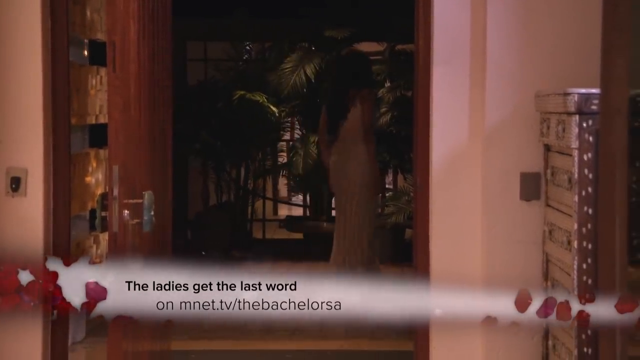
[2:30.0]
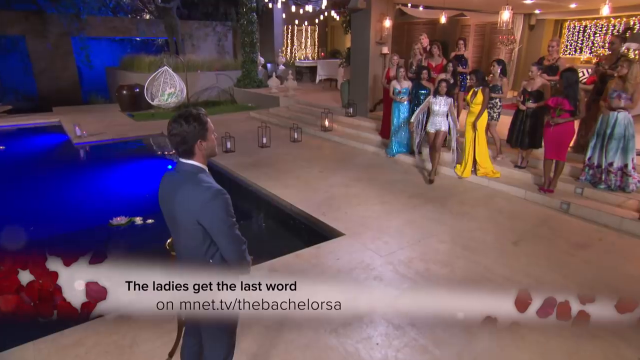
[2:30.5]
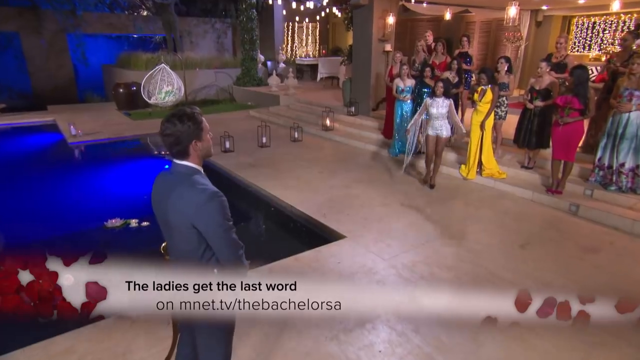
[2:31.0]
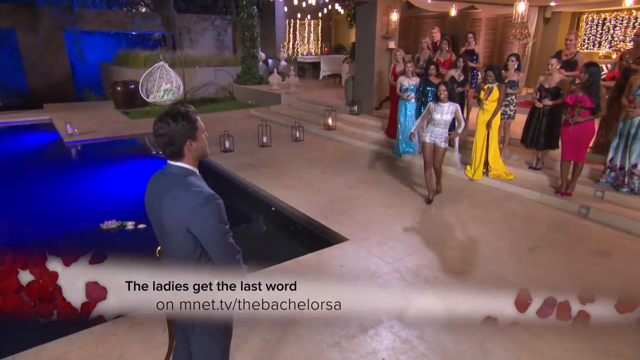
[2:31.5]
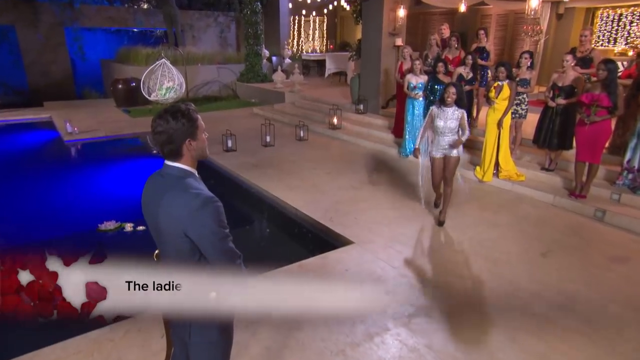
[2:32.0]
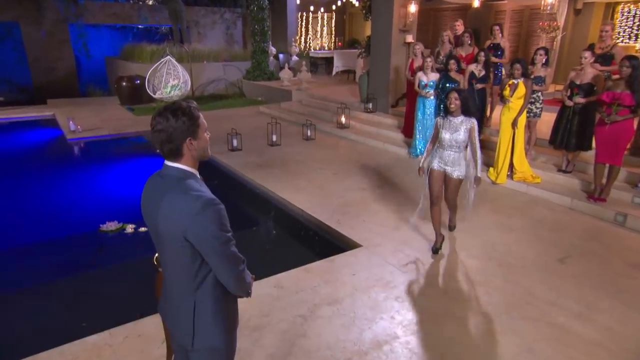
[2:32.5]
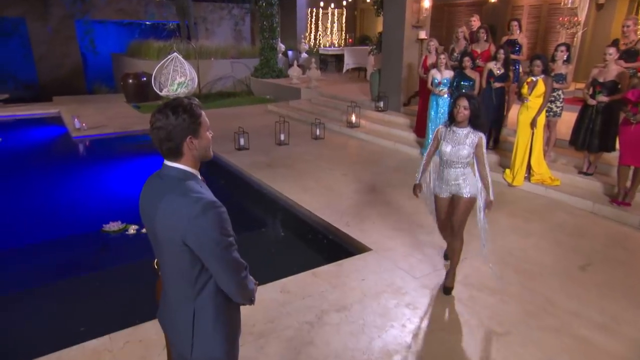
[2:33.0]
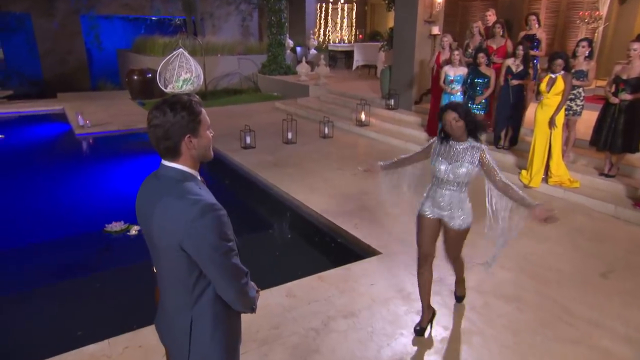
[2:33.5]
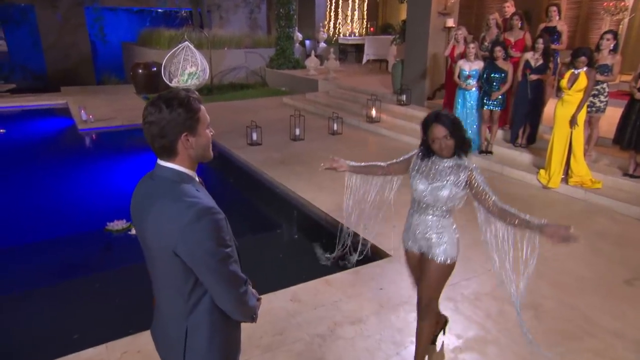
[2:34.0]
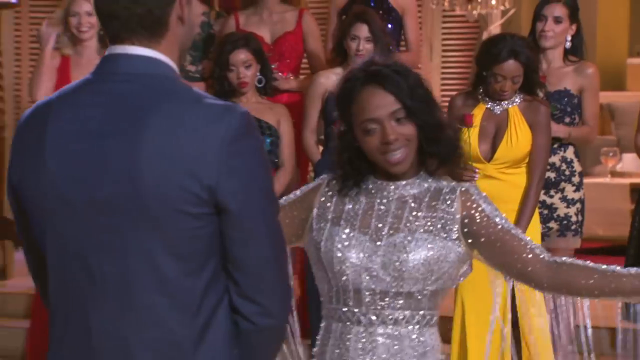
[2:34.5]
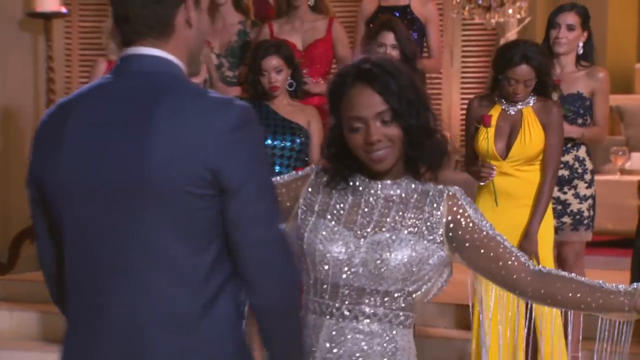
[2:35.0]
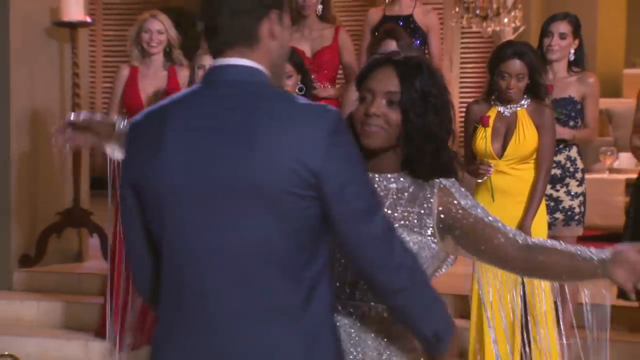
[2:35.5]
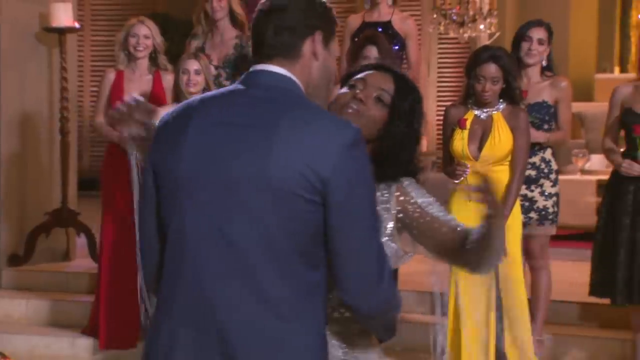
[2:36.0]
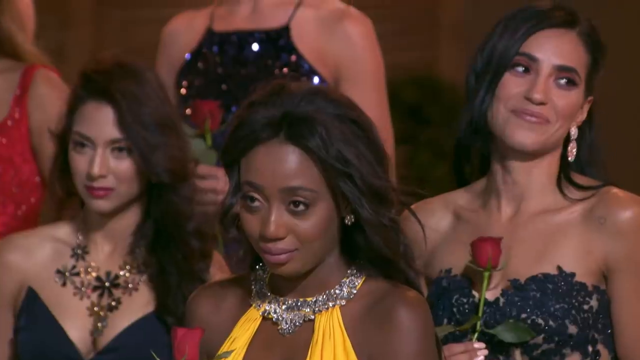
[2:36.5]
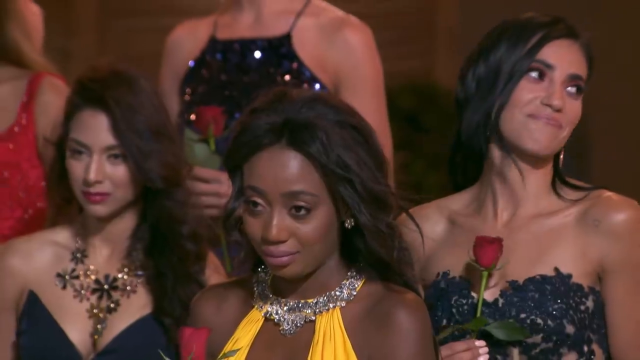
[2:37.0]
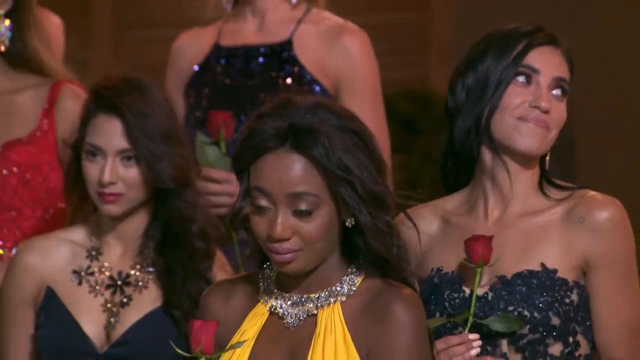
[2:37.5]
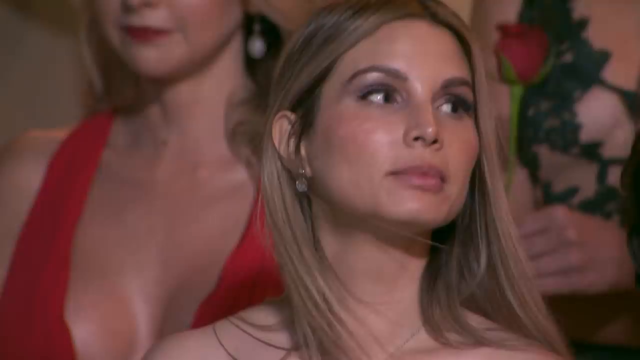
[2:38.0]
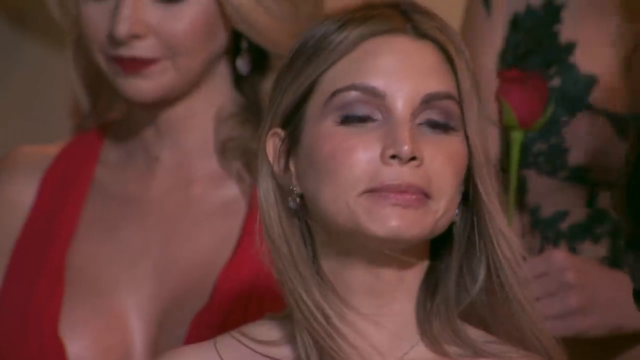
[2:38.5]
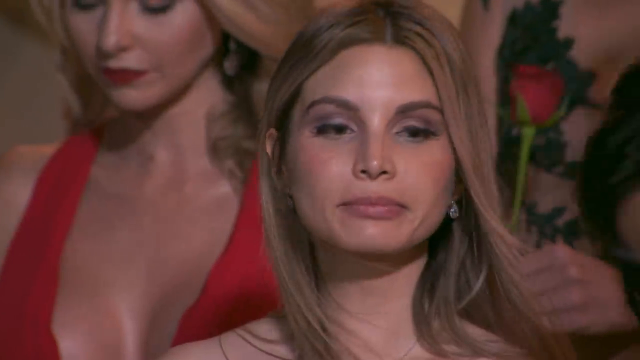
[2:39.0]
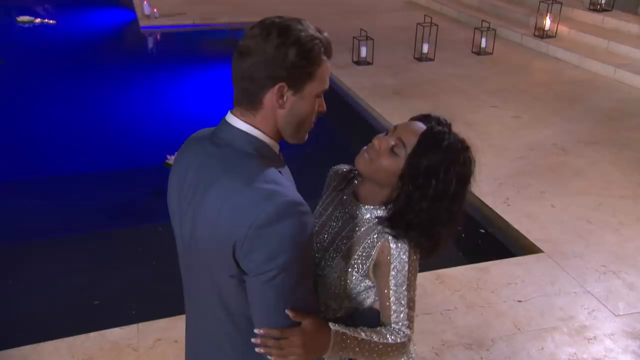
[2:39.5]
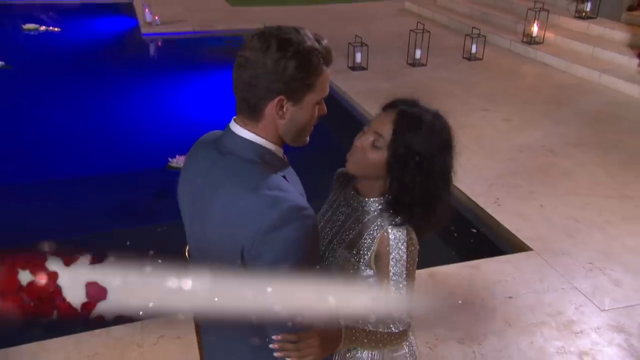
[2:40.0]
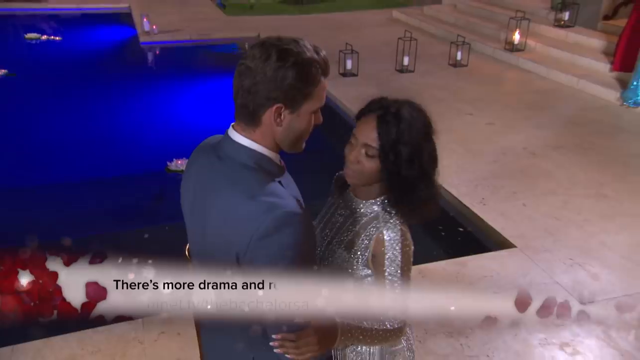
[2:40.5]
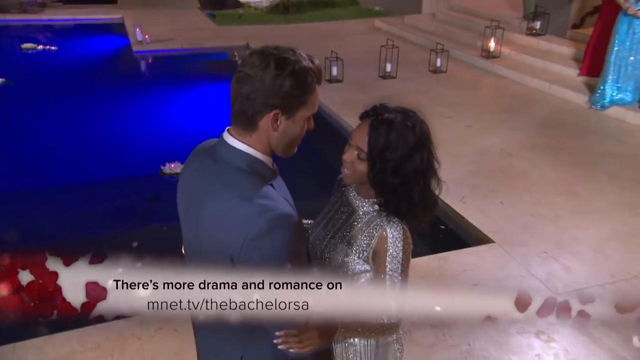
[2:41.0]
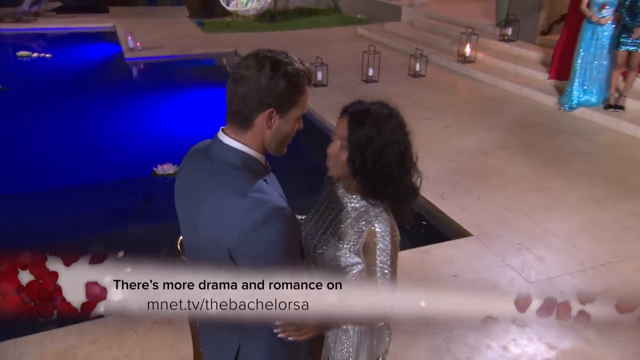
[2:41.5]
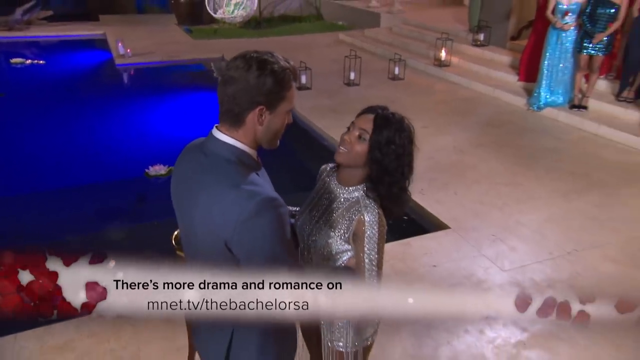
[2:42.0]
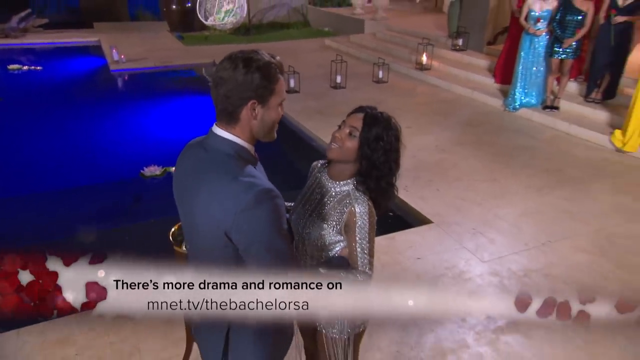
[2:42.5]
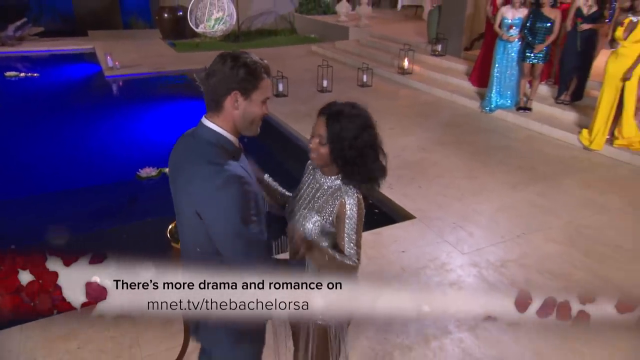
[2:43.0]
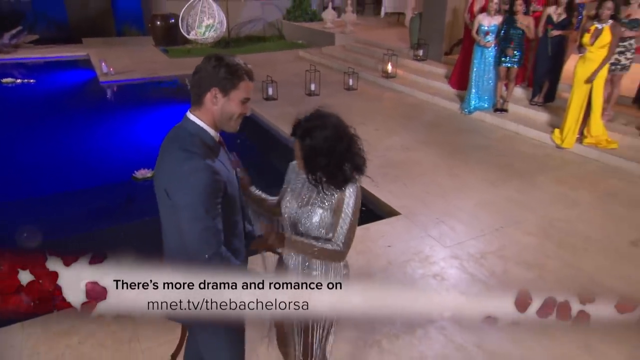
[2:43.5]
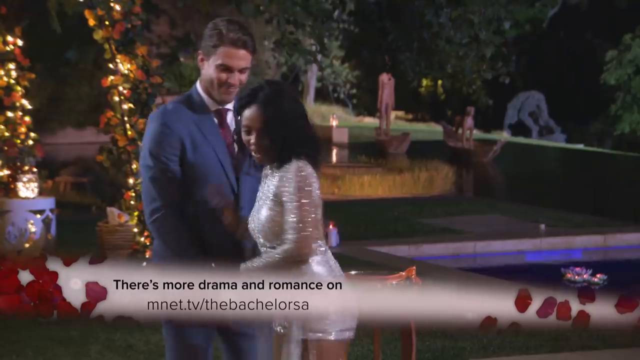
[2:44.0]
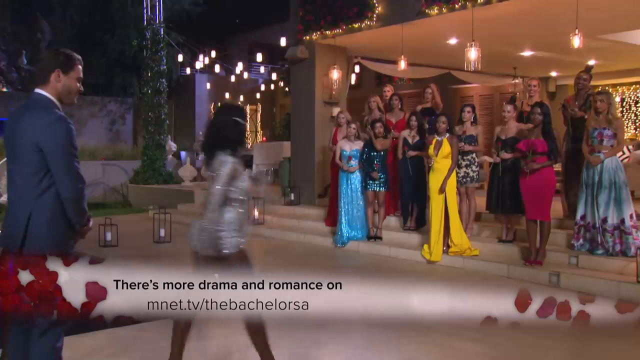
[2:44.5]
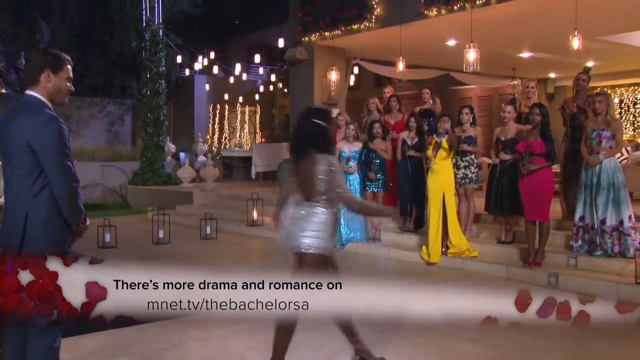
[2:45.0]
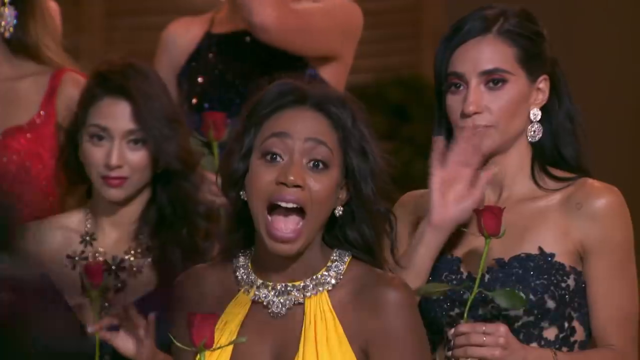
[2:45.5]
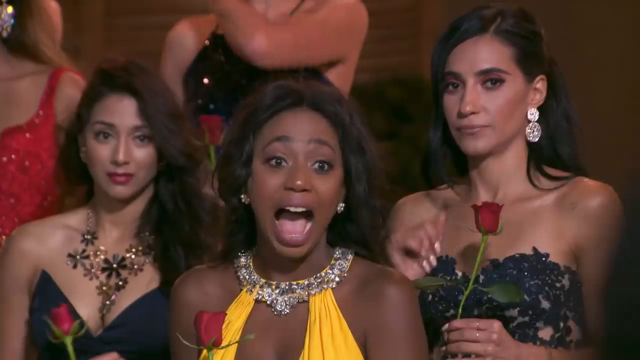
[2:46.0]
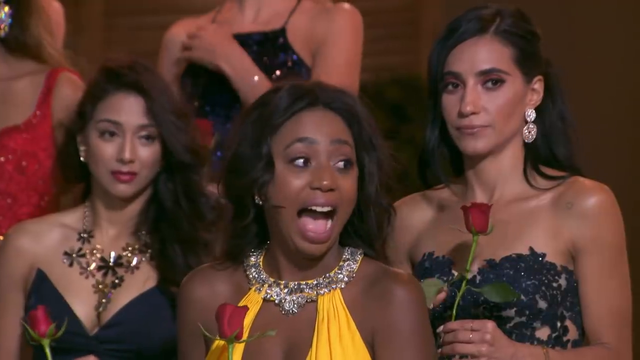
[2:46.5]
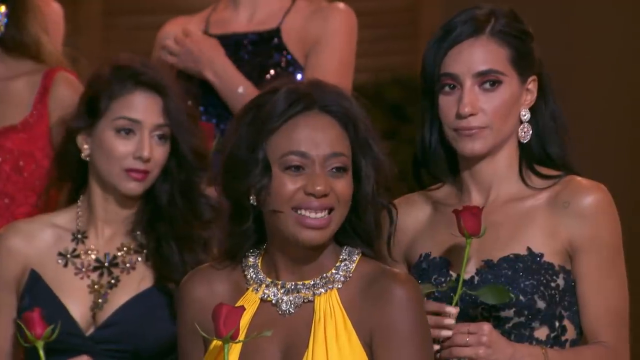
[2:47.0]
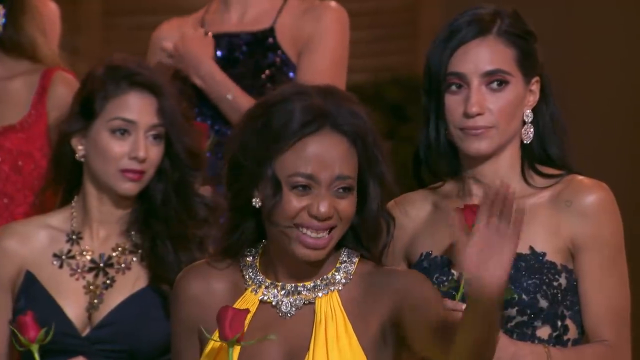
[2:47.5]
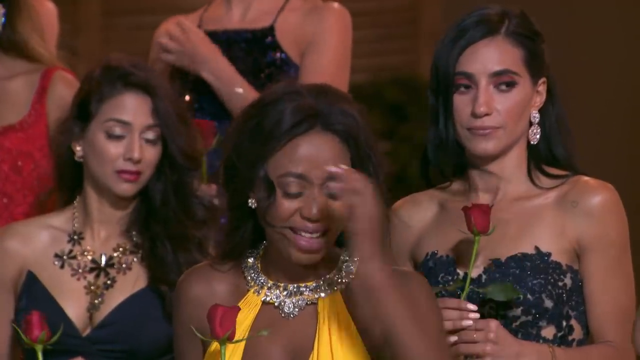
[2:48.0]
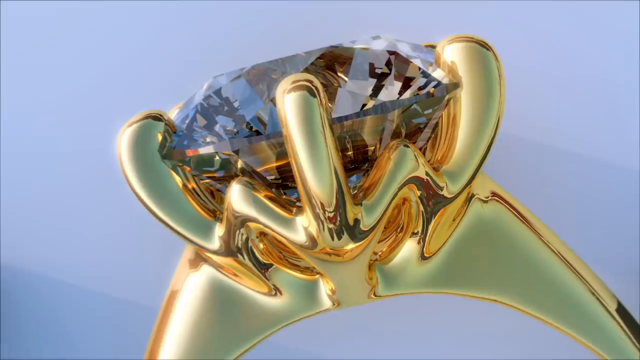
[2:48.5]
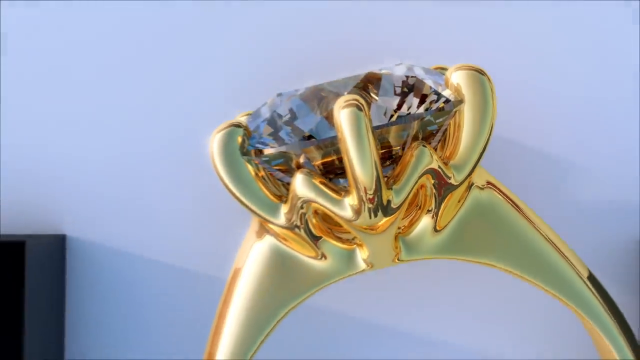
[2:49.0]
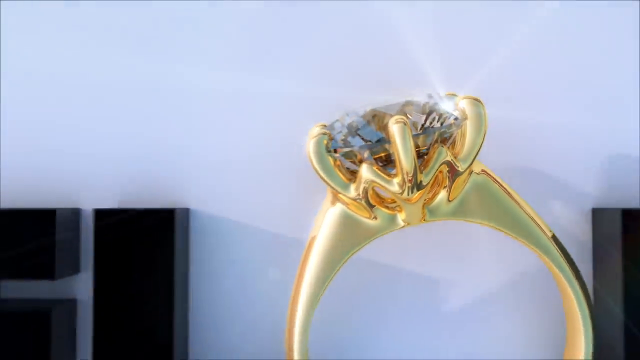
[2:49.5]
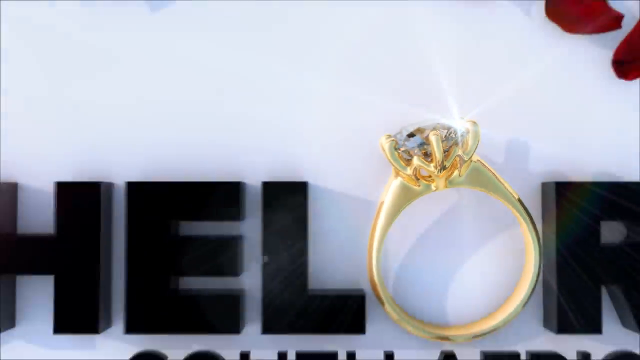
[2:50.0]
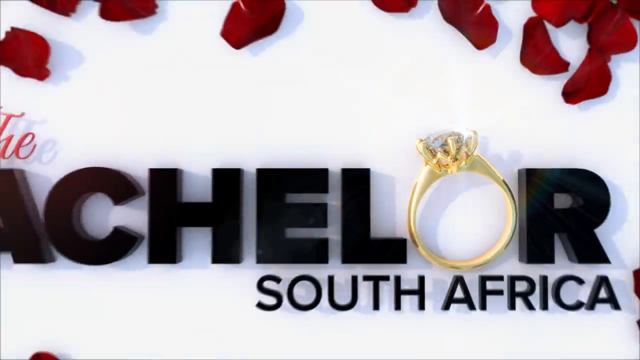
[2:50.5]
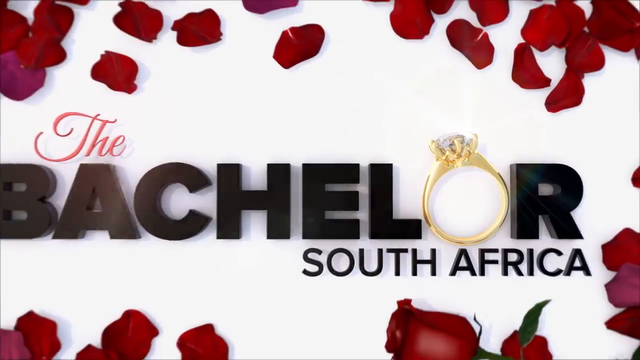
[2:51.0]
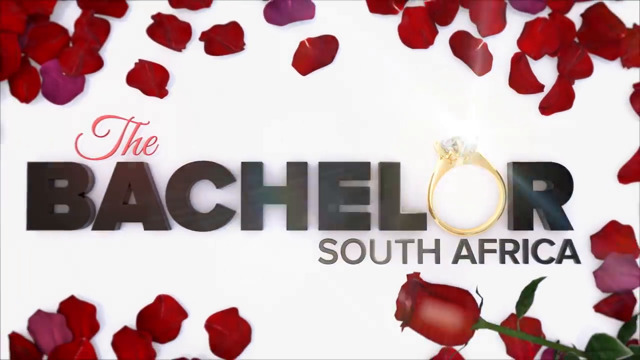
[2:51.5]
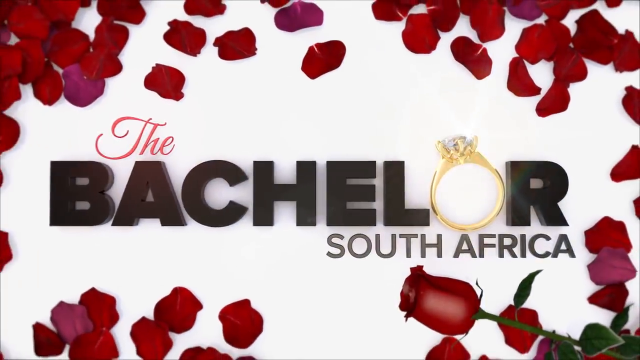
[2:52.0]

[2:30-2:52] The scene appears to be outdoors, outside a mansion. On the mansion's stairs stands a group of women about 27 to 37 years old, some black and some white, most of them in formal dresses: some blue, some yellow, some pink and some multicolored. On the far right-hand side, the mansion has a window with gold lining, and many strips of light brighten the dark area. One woman, wearing a very short silver bodysuit with long sleeves, walks towards a man who stands tall in front of the women, next to a square blue swimming pool. On the screen are the words "The ladies get the last word", with "on Mnet TV/the bachelor RSA" written underneath.